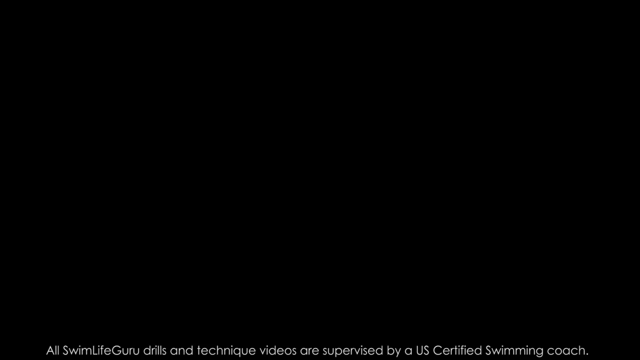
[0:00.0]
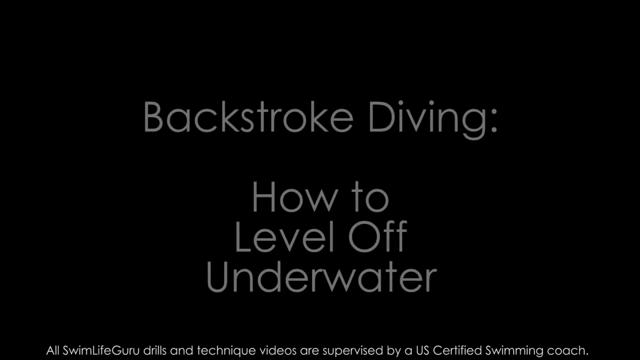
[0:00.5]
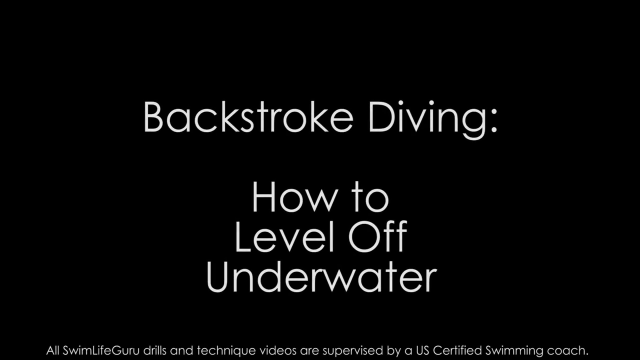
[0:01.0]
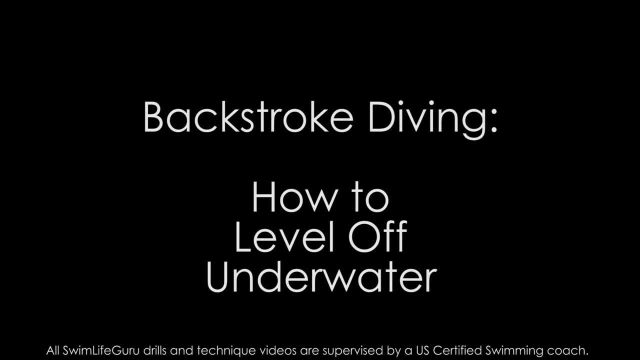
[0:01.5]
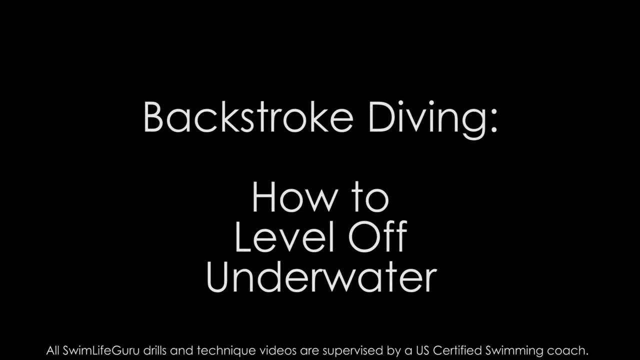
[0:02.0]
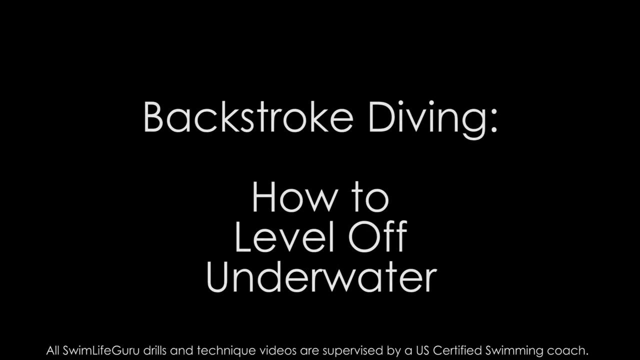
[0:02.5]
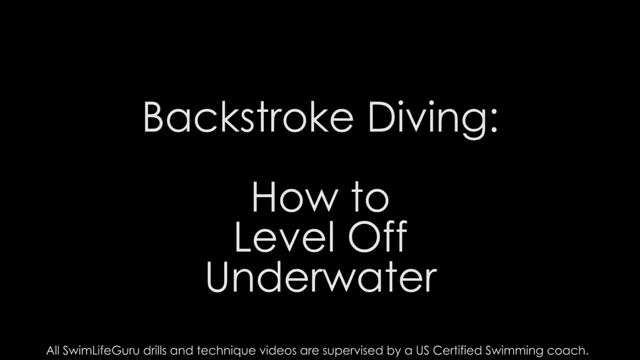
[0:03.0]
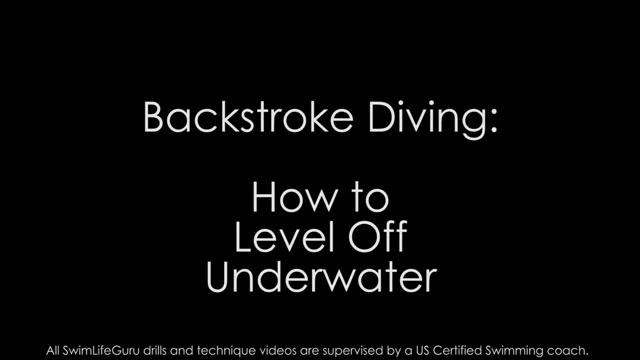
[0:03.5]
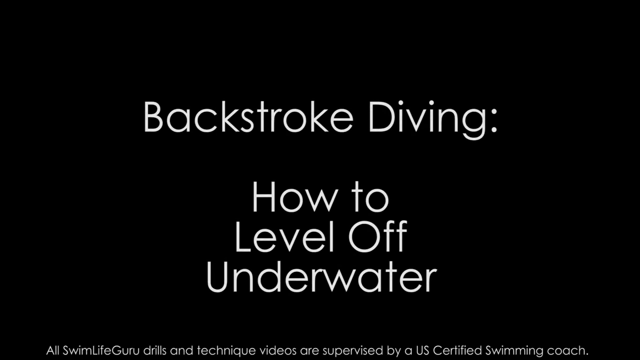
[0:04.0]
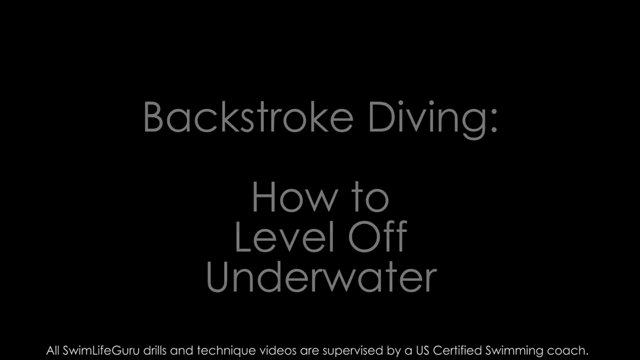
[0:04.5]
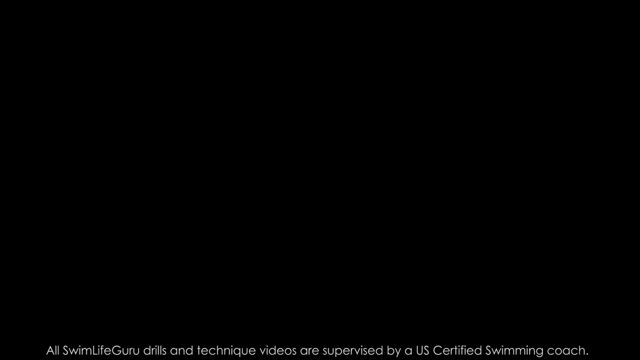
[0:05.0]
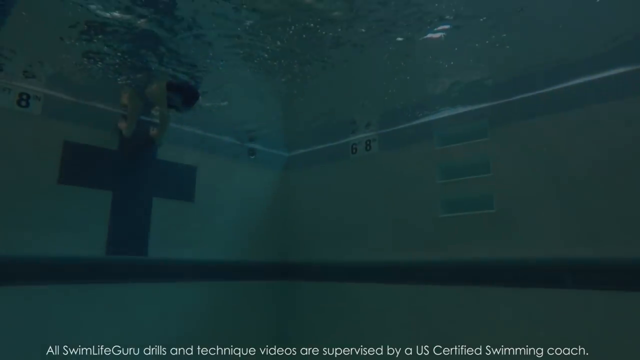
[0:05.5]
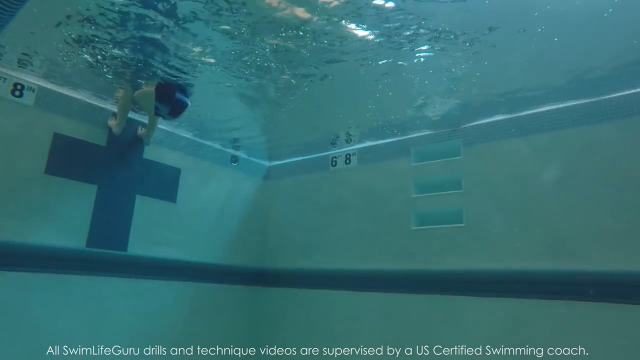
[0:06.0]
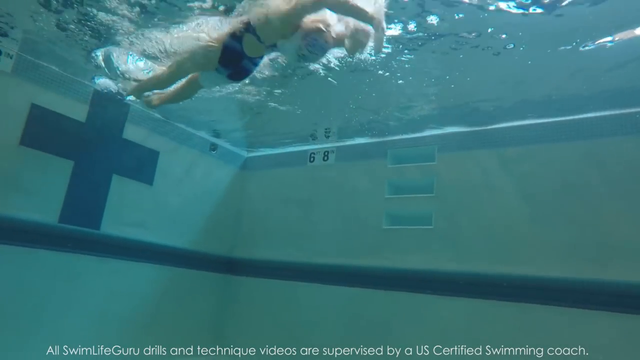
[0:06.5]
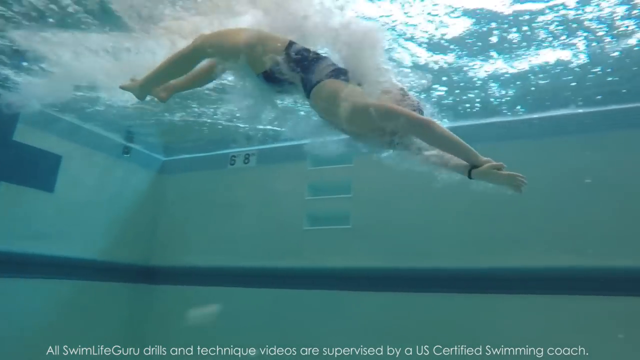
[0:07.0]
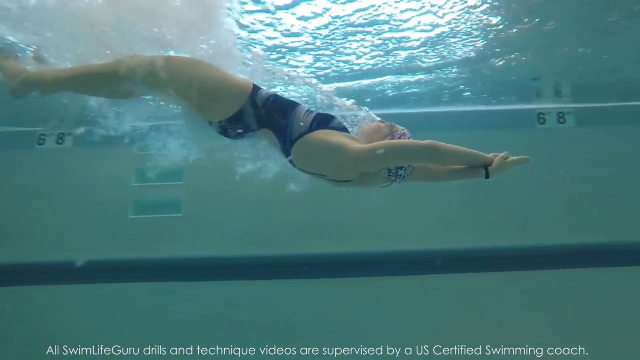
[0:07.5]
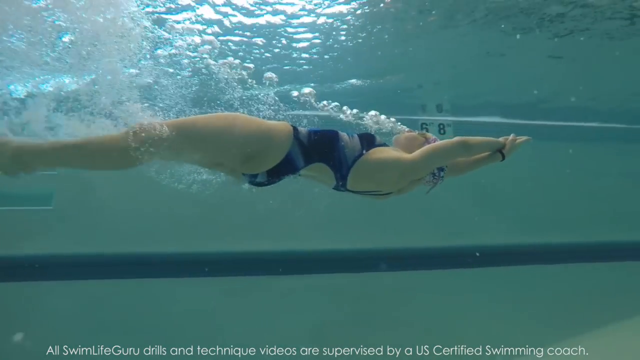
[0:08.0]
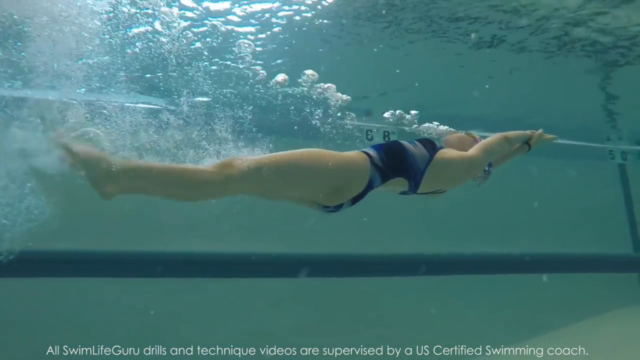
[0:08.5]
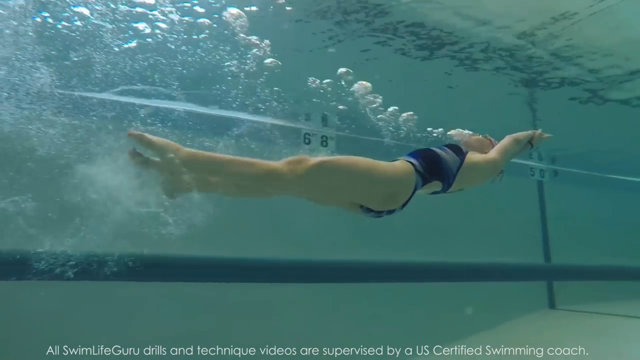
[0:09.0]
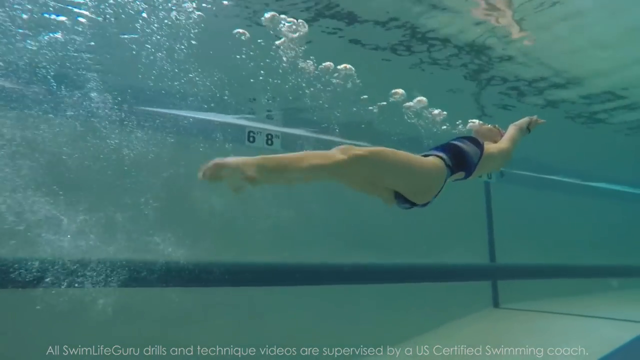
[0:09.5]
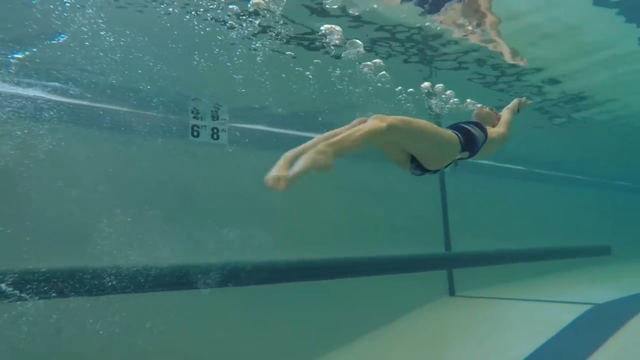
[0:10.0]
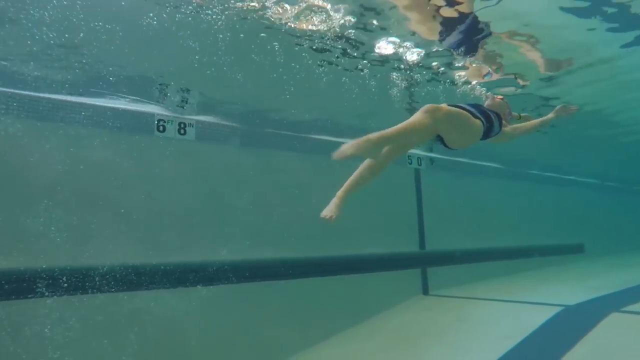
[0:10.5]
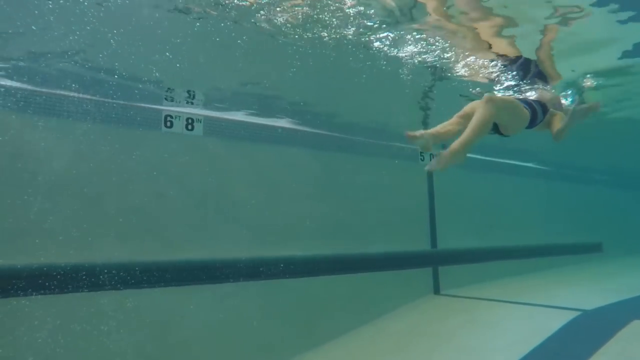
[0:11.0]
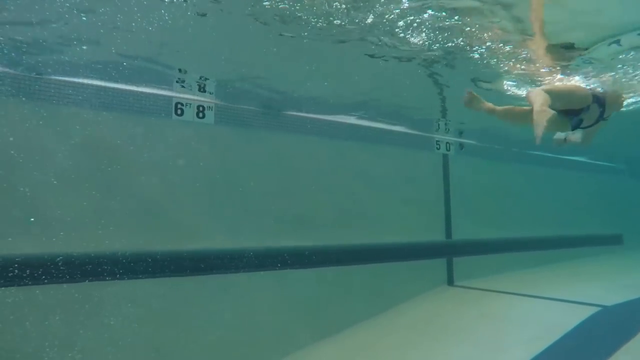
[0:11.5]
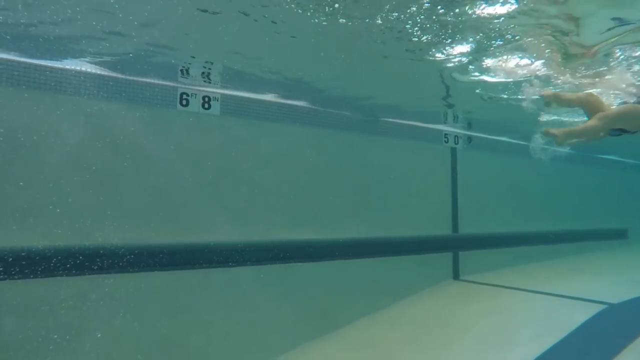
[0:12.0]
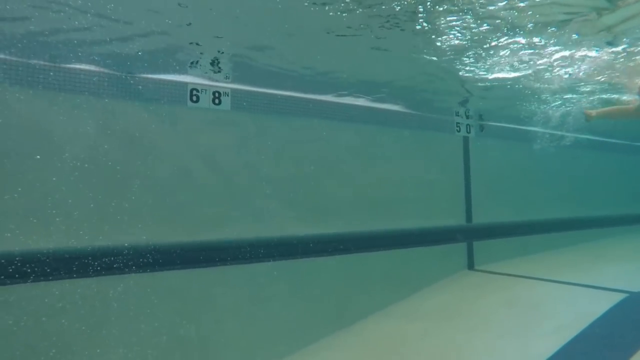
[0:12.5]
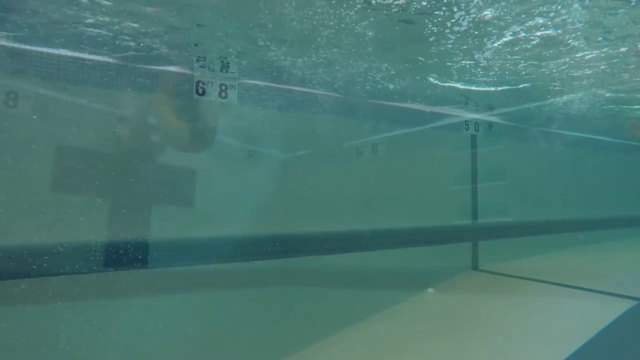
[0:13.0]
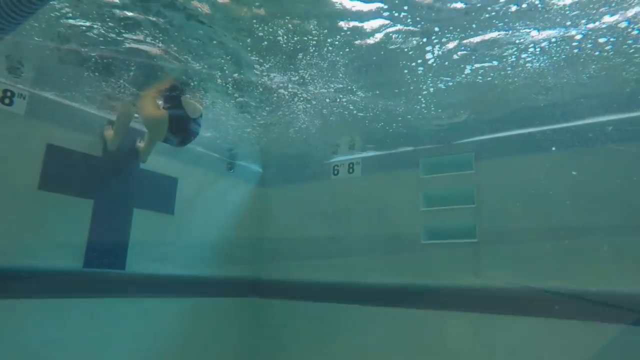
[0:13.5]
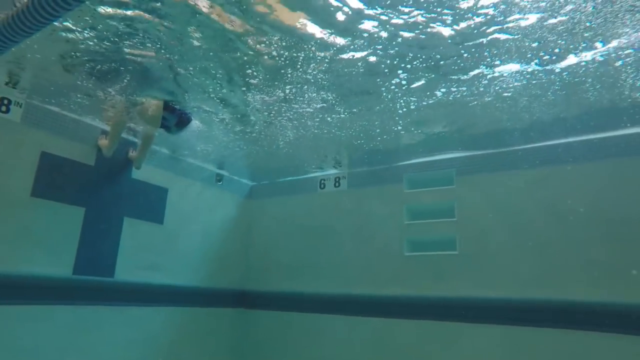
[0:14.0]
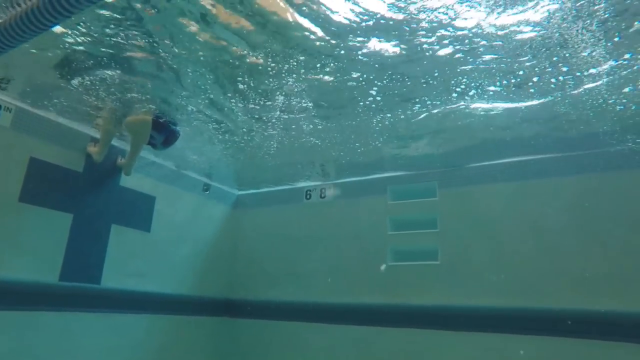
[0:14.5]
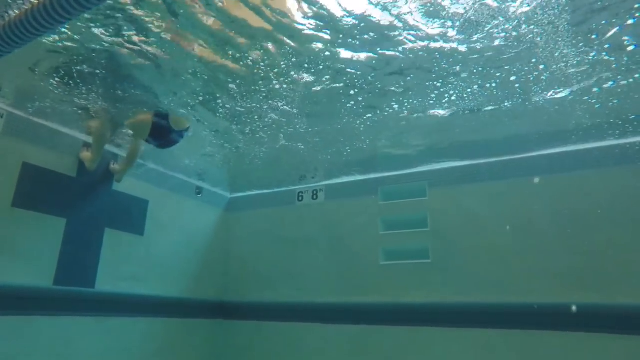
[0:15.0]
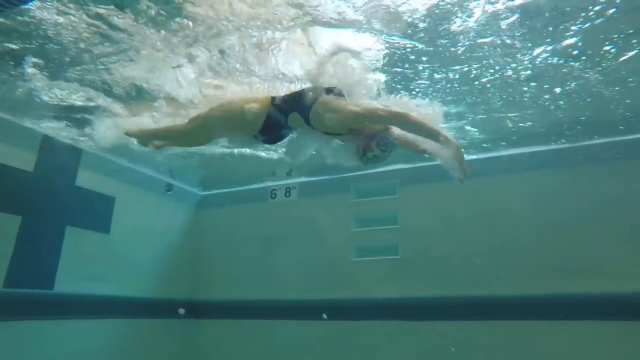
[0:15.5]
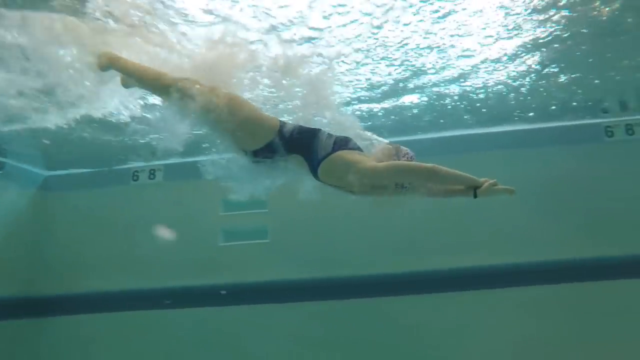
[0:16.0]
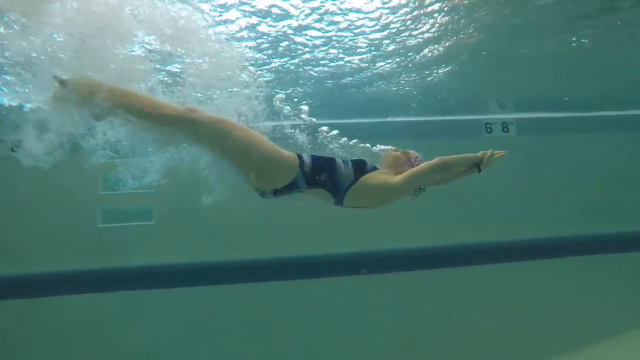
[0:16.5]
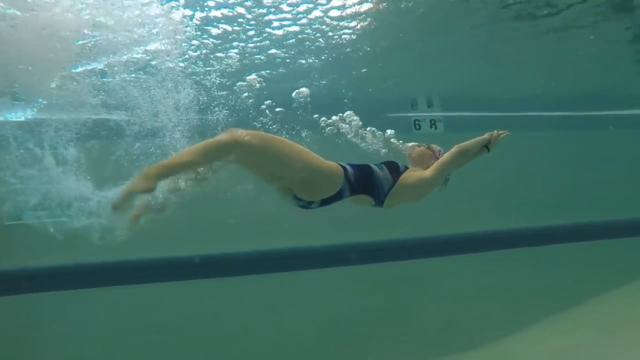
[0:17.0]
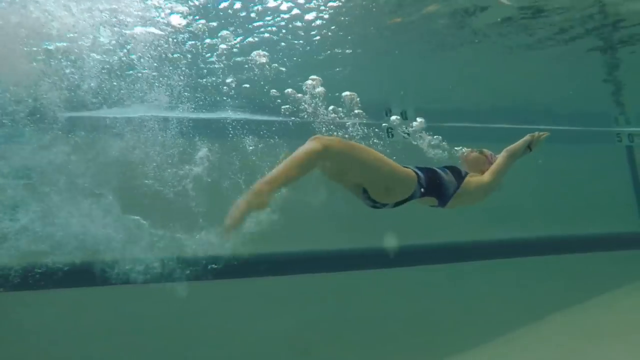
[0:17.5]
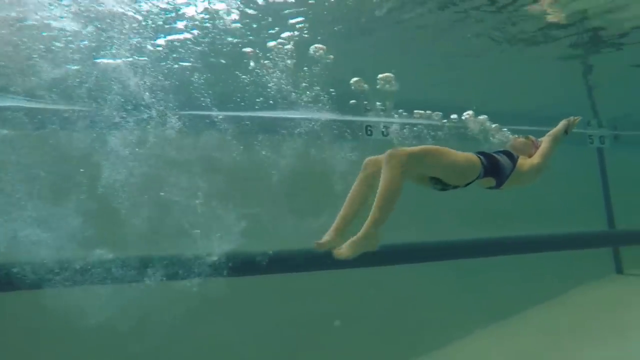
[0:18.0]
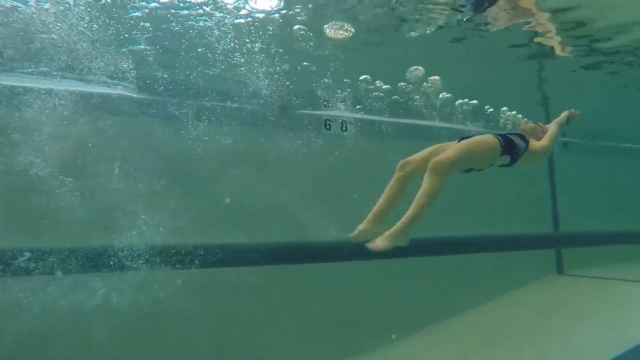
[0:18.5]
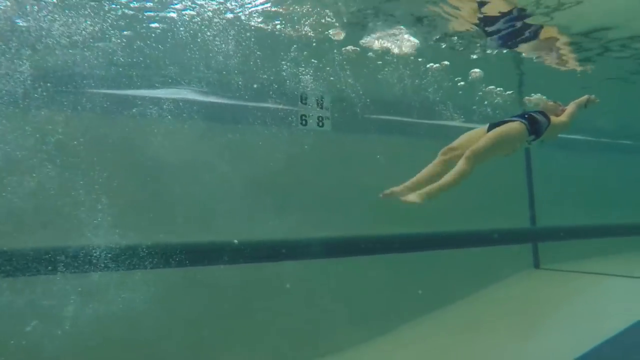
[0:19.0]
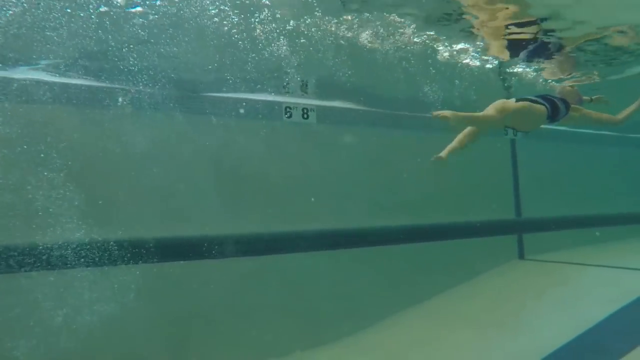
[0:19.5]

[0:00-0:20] A title screen with white writing on a black background reads "Backstroke Diving, How to Level Off Underwater." A female swimmer in a one-piece bathing suit and a swim cap, partially submerged, does a back dive into the water. As she hits the water her hands are outstretched above her head and her feet and legs are tightly pressed together, making herself as streamlined as possible. Bubbles erupt upward toward the surface. Submerged, she has her back down toward the bottom of the pool and her face up toward the top of the water. She keeps her legs stretched out with her toes pointed and kicks almost like a mermaid, propelling her body toward the opposite wall at the far end of the pool, her hands staying outstretched above her head. When she reaches the surface, her nose and mouth are out of the water while her back still points toward the bottom of the pool. Her arms then stretch out to the side rather than above her head to propel herself forward.